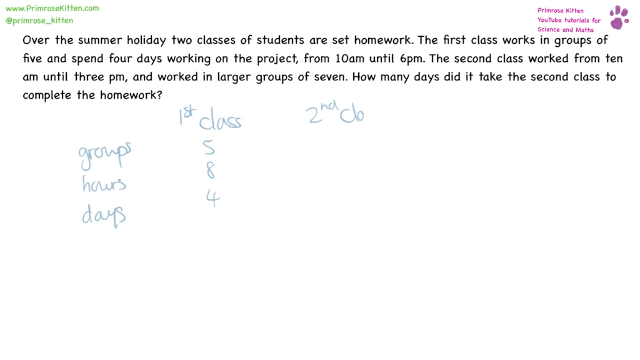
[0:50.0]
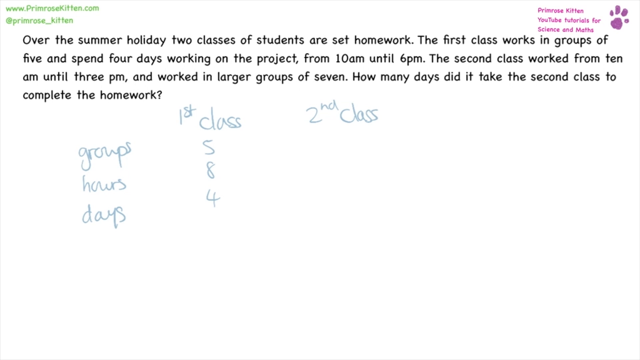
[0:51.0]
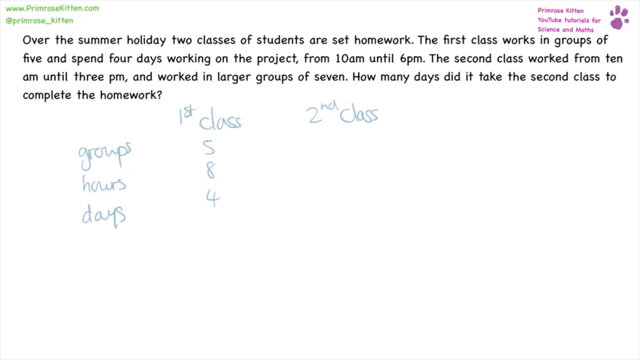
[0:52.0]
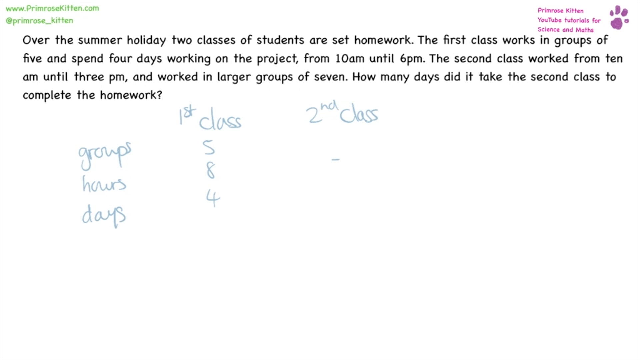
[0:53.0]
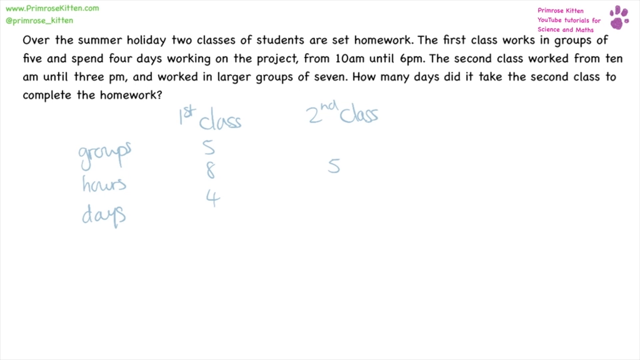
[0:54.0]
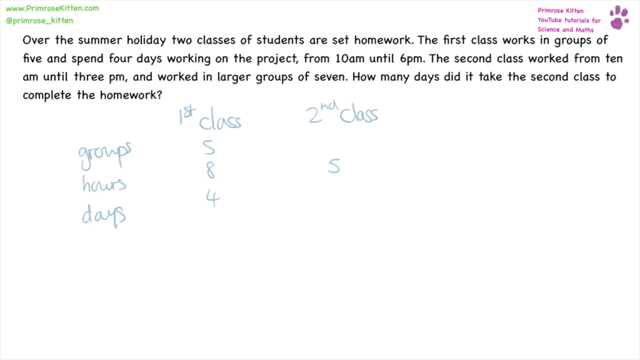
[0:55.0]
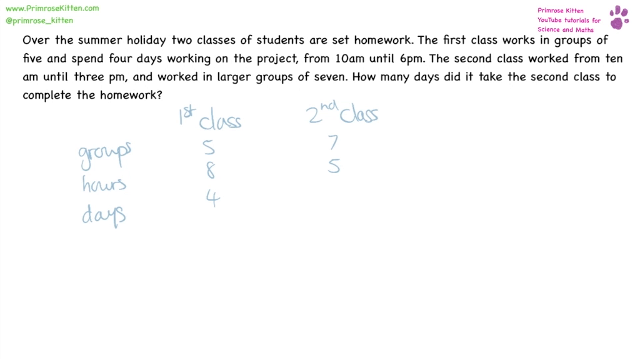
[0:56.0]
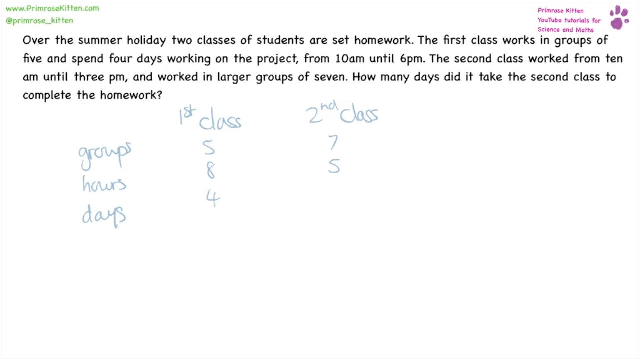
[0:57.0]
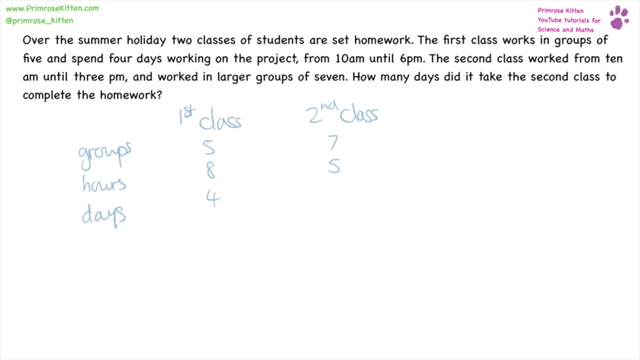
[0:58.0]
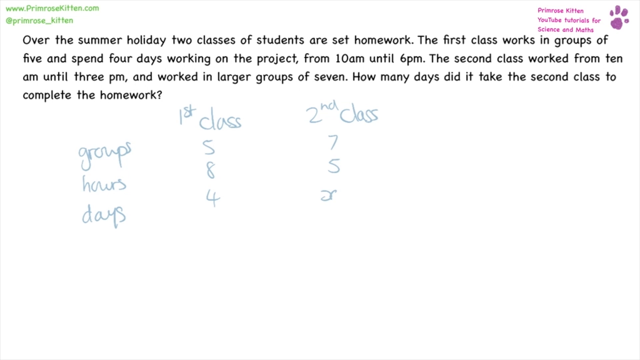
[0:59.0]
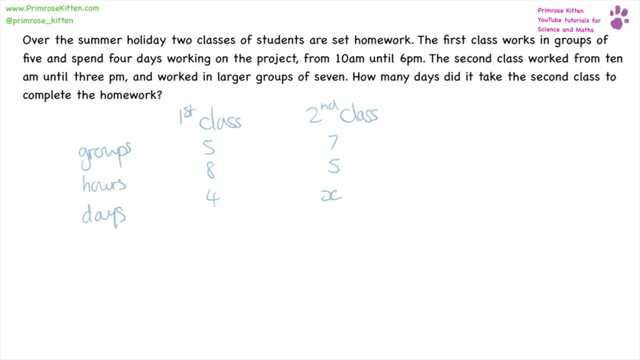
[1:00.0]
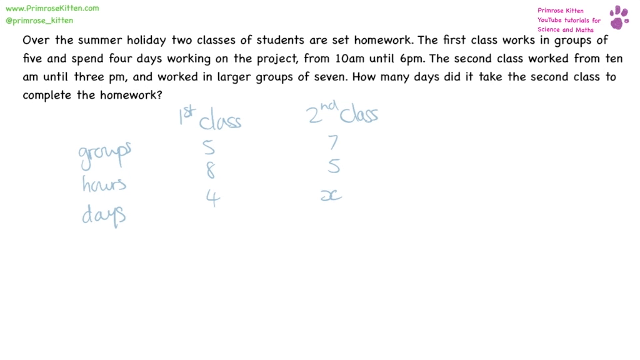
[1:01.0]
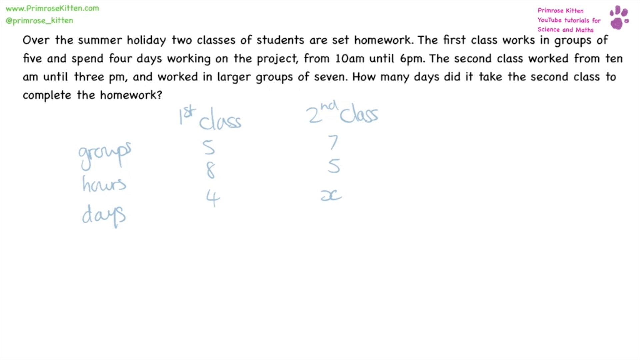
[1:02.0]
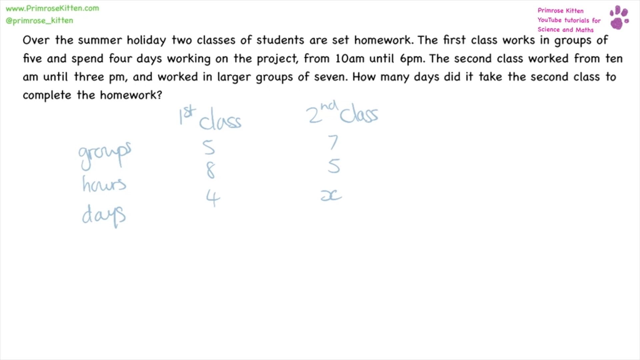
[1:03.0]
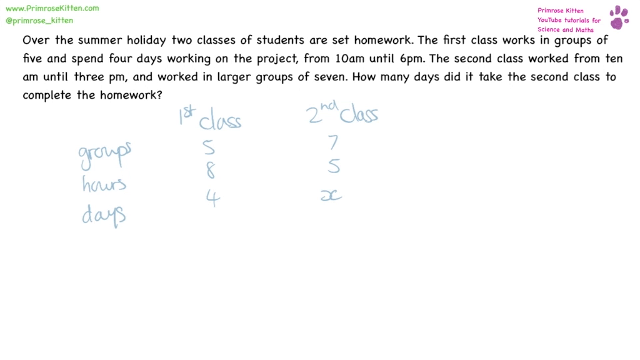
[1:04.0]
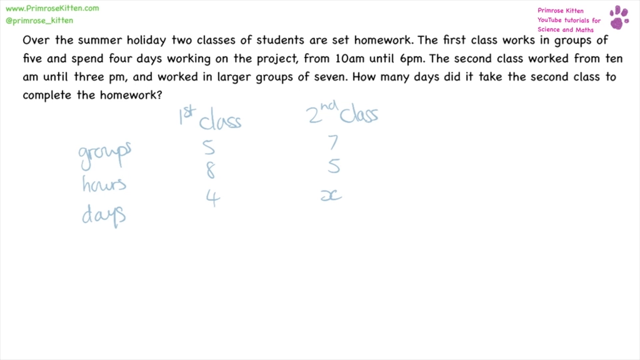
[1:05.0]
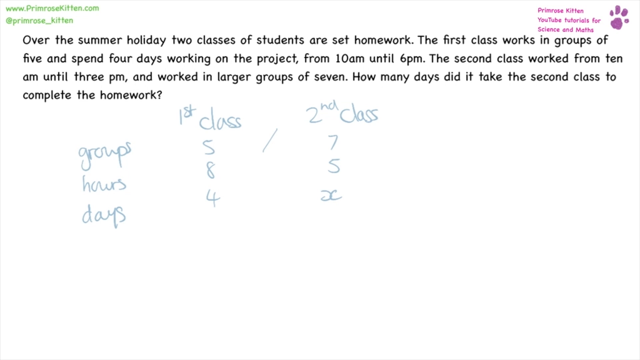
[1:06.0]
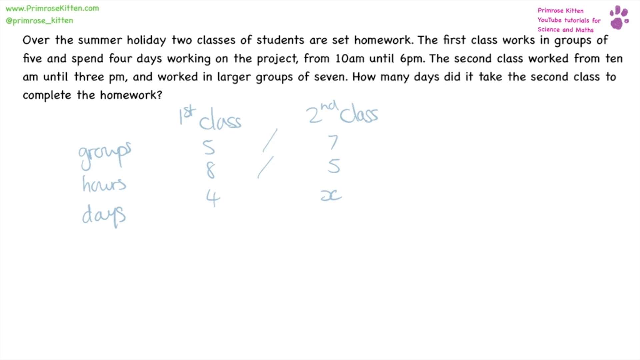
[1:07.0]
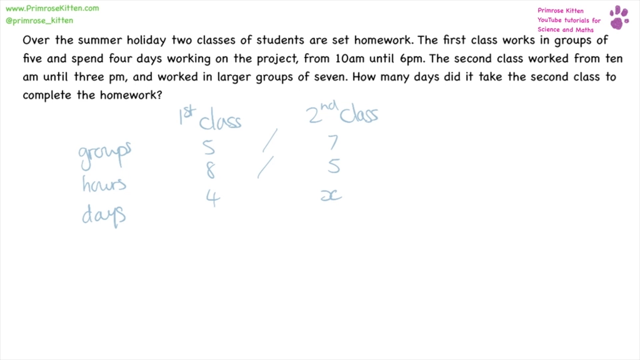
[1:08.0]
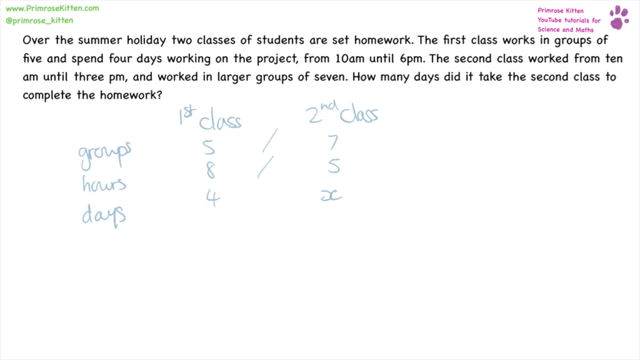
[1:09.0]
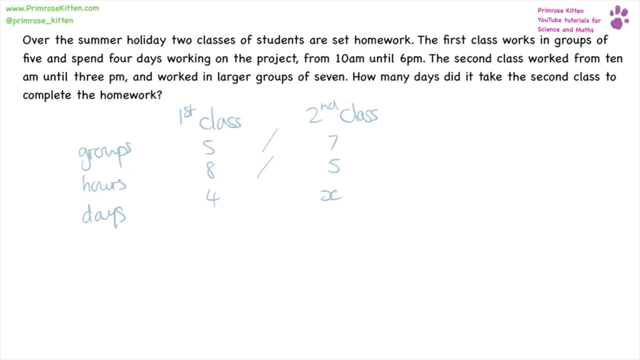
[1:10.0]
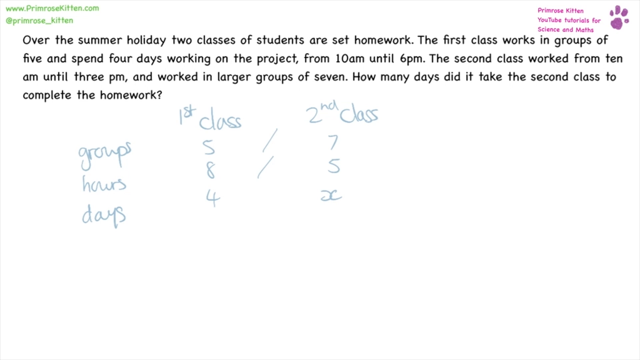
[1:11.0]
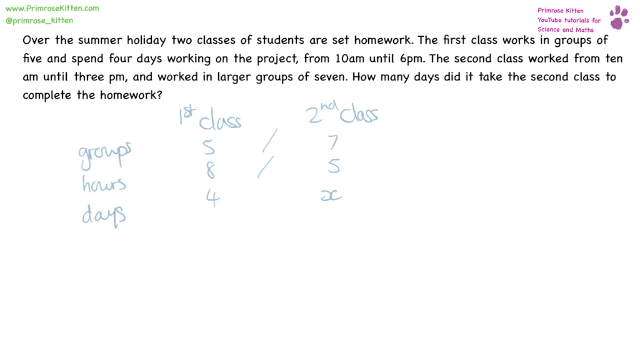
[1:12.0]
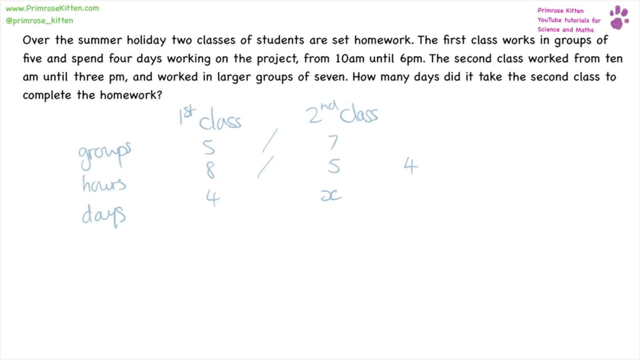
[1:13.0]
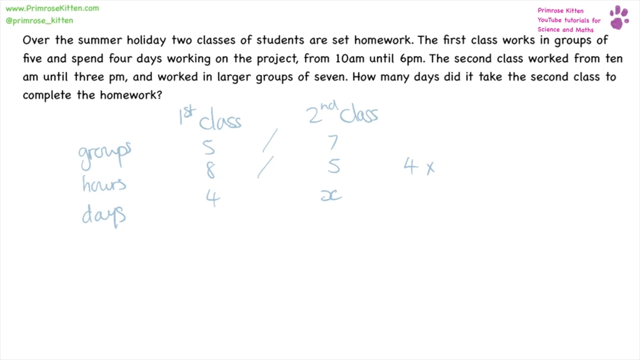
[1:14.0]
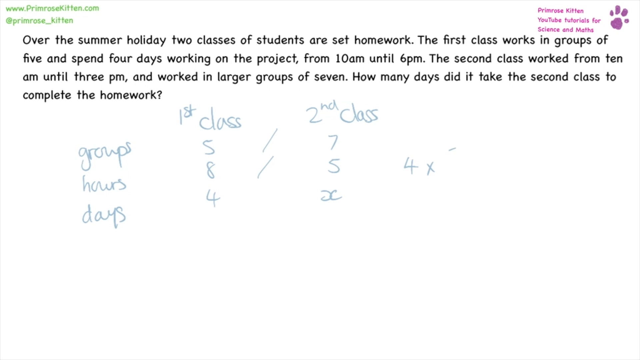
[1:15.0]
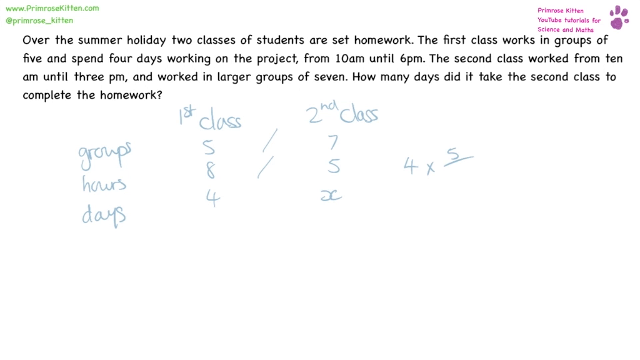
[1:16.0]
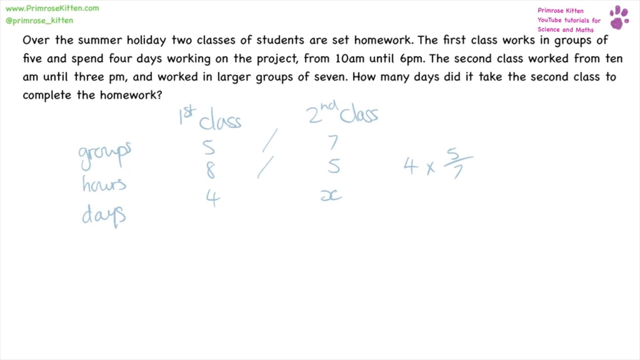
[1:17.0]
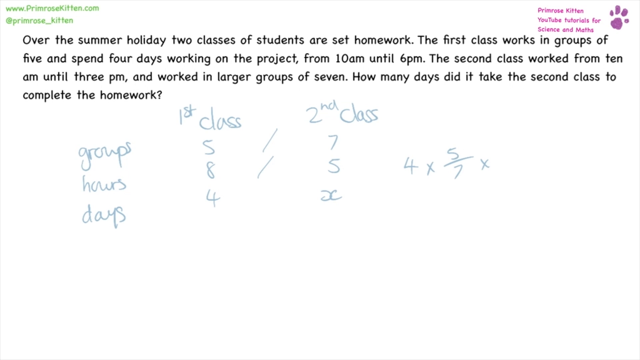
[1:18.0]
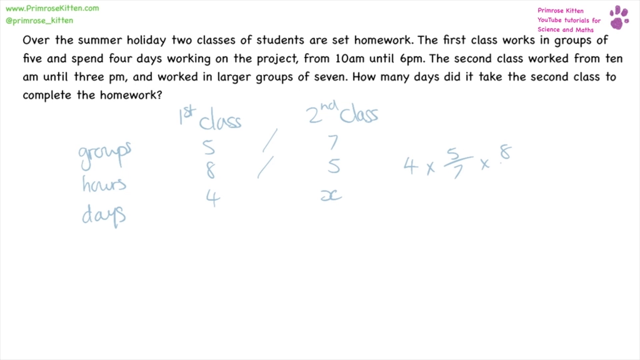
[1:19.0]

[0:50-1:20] A small paragraph is written in black, in small but readable letters. It begins "Over the summer holiday, two classes of children are set a homework." It states that the first class works in a group of five and spends four days working on the project from 10 a.m. until 6 p.m., that the second class works from 10 a.m. until 3 p.m. in larger groups of seven, and asks how many days the second class takes to complete the homework. A pen then writes on the screen, setting out groups, hours and days: 5, 8, 4 for the first class and 7, 5, X for the second. The answer is worked out. A website is written on screen: "www.primerosekitchen.com", along with the hashtag "# promise kitten".